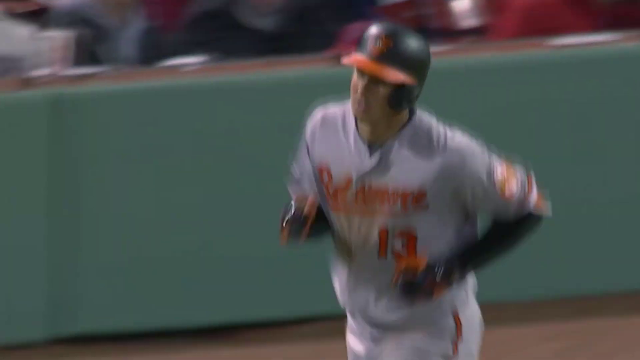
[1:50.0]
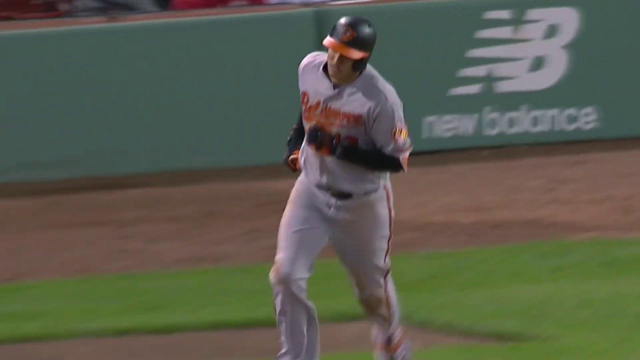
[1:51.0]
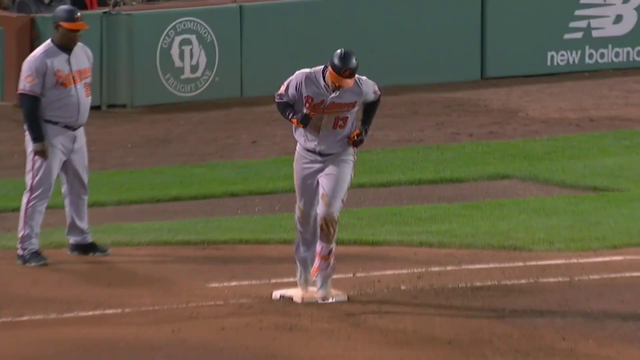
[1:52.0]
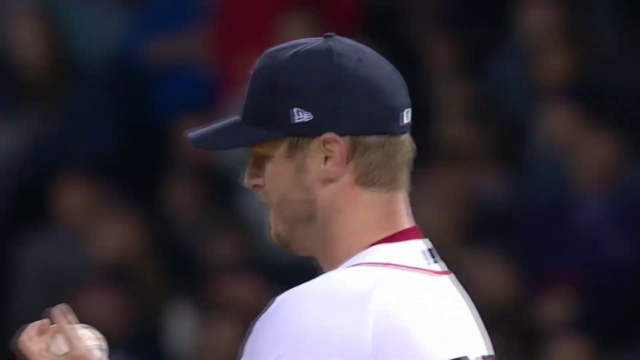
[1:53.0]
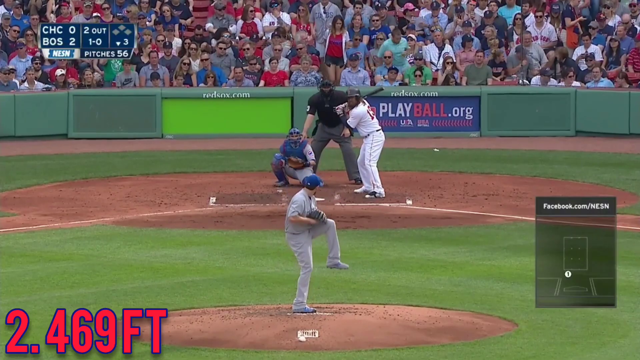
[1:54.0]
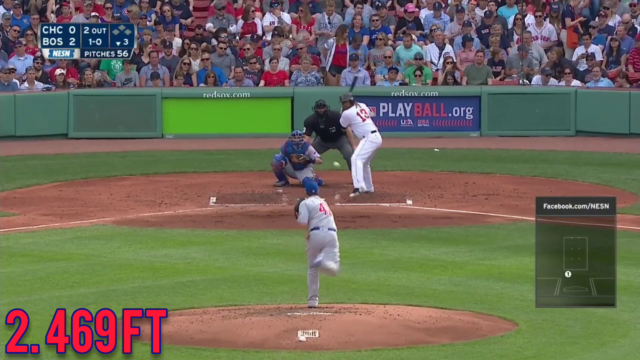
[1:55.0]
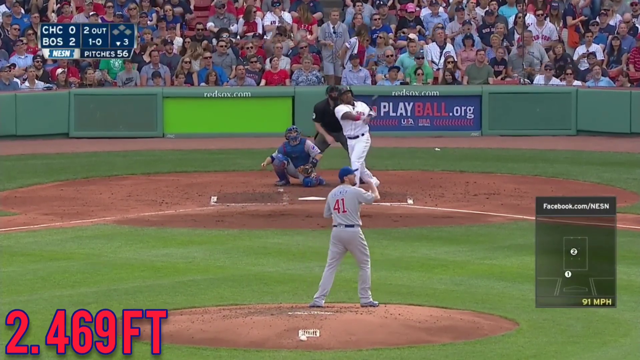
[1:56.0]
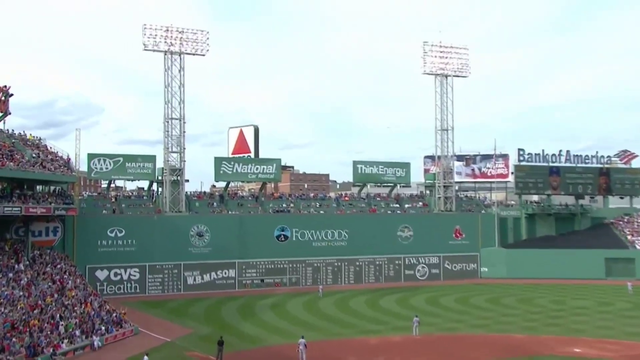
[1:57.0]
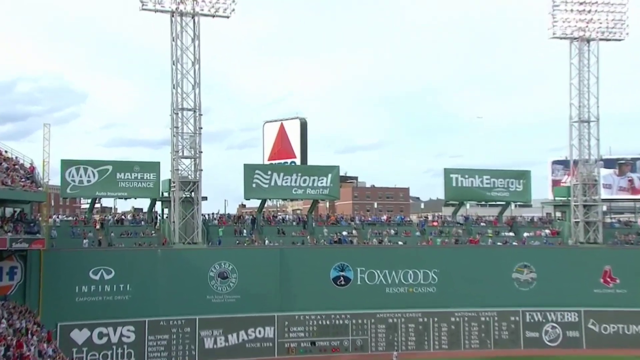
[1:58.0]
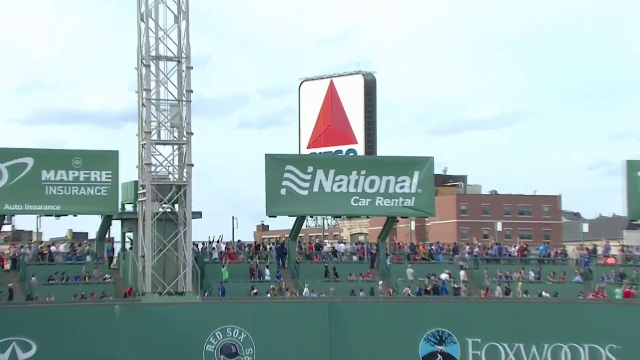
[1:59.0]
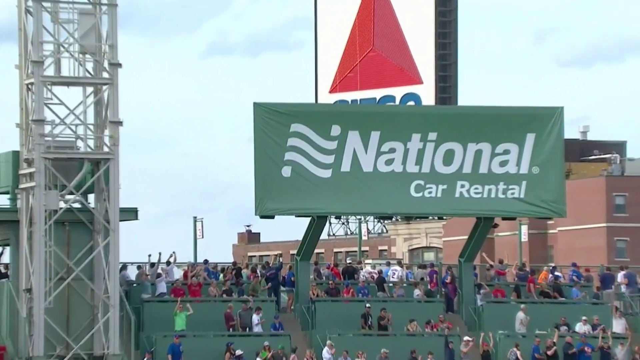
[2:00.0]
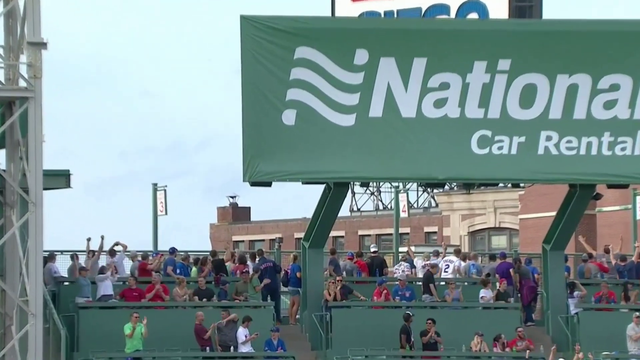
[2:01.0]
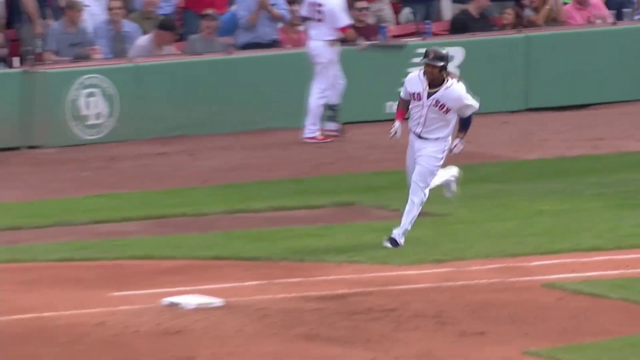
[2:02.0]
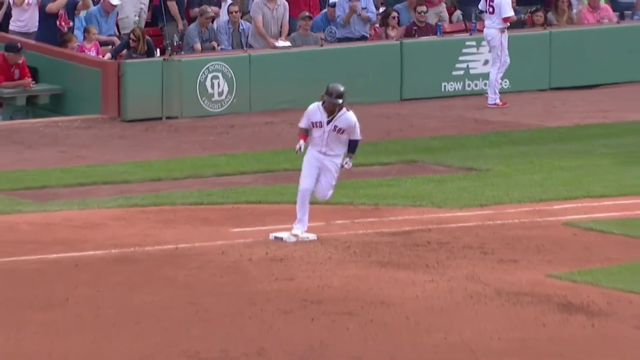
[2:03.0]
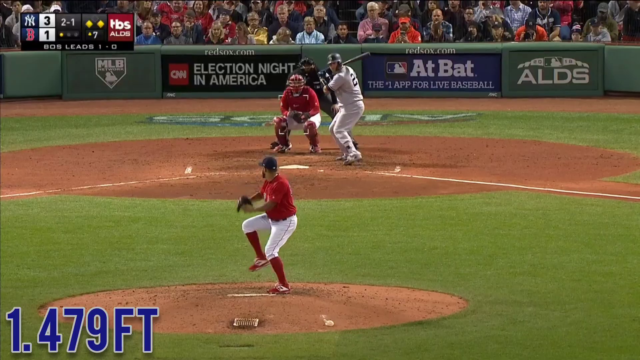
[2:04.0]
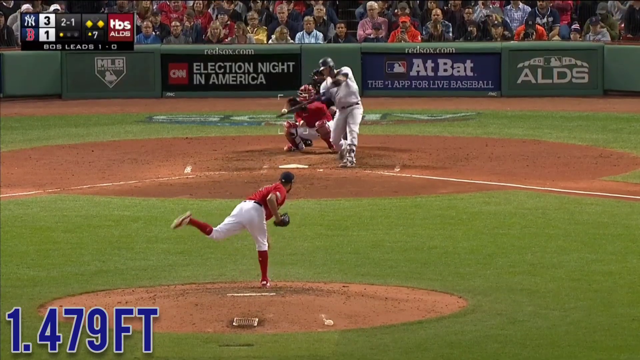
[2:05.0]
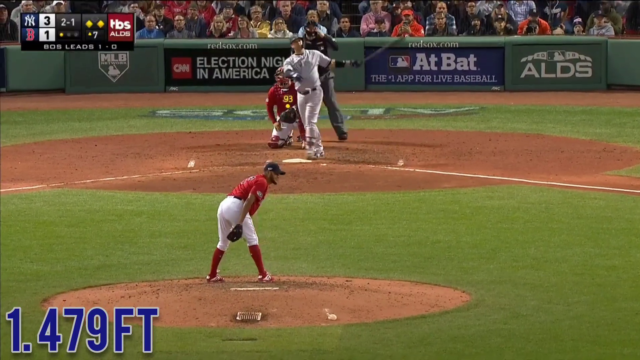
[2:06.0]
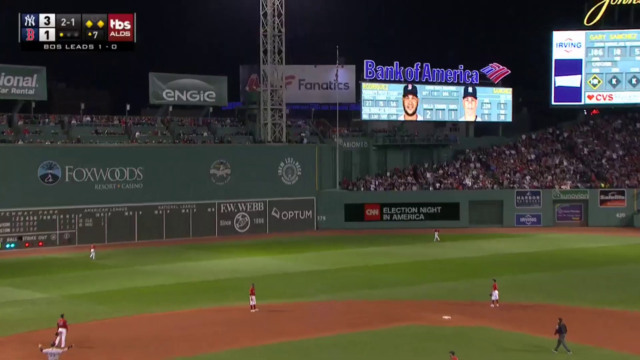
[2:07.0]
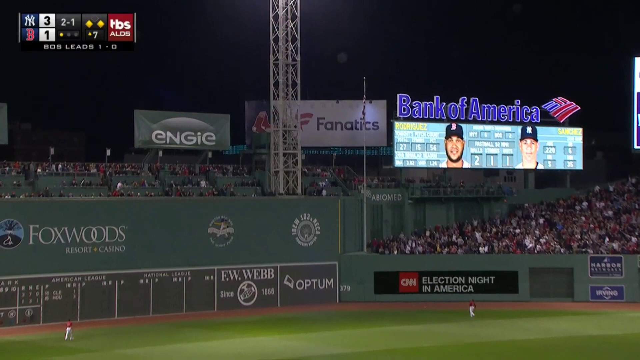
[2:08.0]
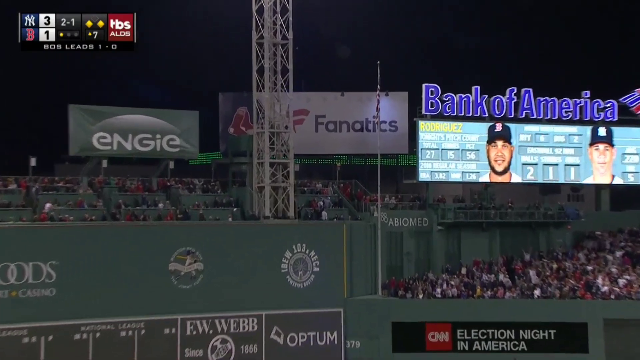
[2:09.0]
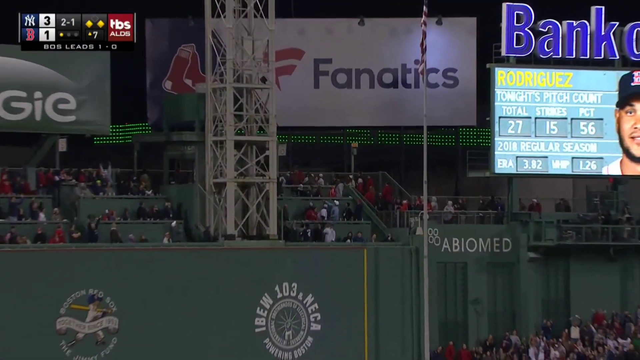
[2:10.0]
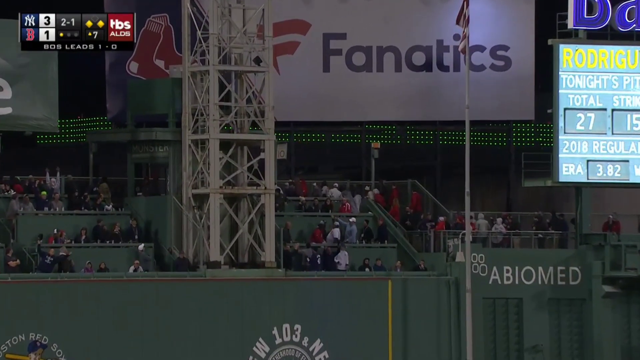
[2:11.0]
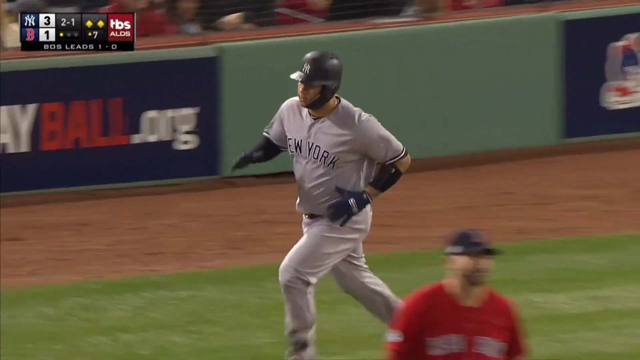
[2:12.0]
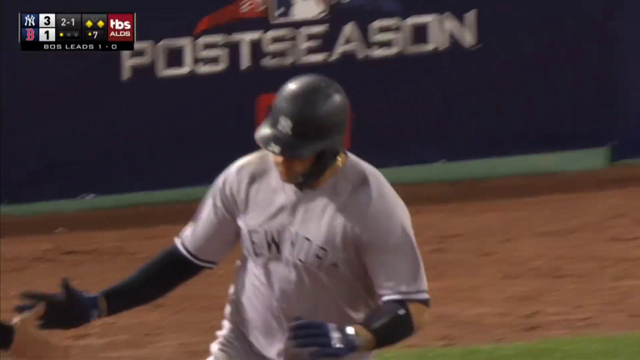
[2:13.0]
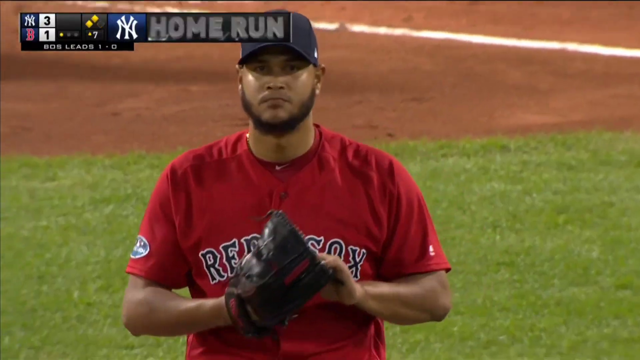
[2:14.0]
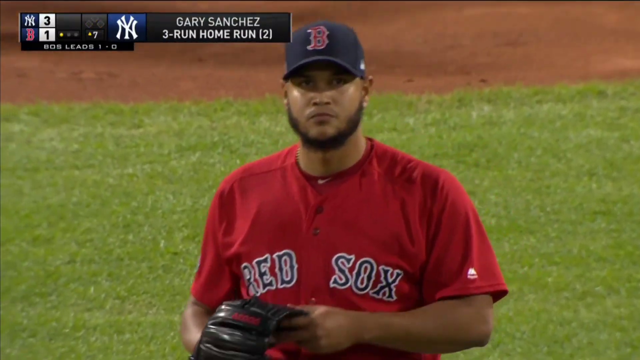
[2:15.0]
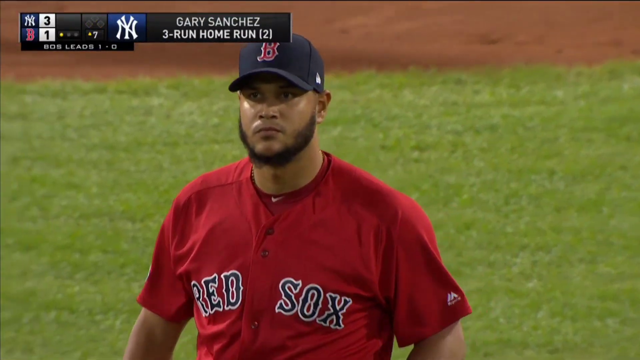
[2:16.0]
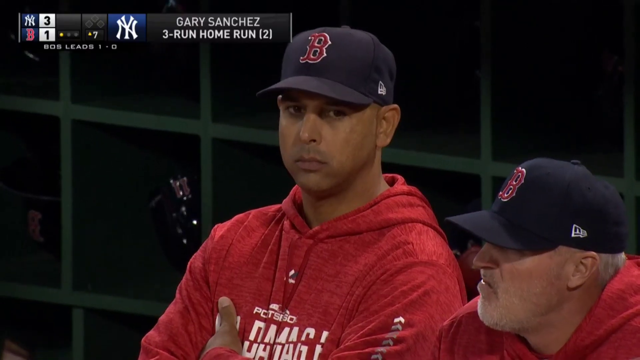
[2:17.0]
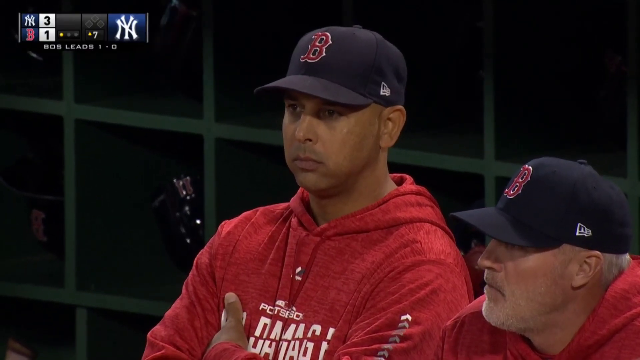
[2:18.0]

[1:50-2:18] A Baltimore Orioles player, number 13, having just hit a home run, jogs around the bases and rounds first base. The scene briefly changes to the pitcher. Then a right-handed pitcher with a blue hat delivers a fastball to a Boston Red Sox player, who hits it hard into left center field against a bright blue and white sky; the ball falls out of the stadium, apparently headed for the street outside Fenway Park. The home run travels 479 feet. The scene changes to a Boston Red Sox left-hander and a player in a gray uniform; a right-handed batter, a Yankees player, hits the pitch hard deep into left center and out of the stadium. The Yankees player's identity is unclear; it may be Giancarlo Stanton. The picture then changes to a view of Alex Cora, the Red Sox manager.